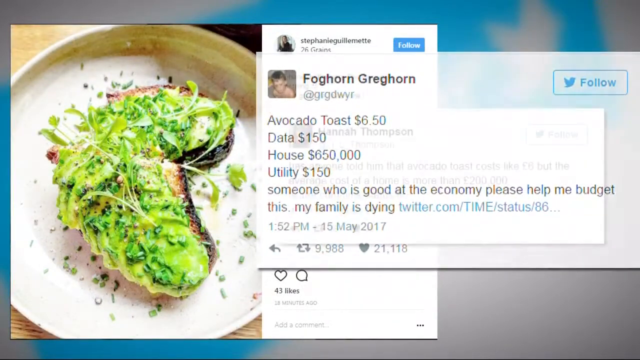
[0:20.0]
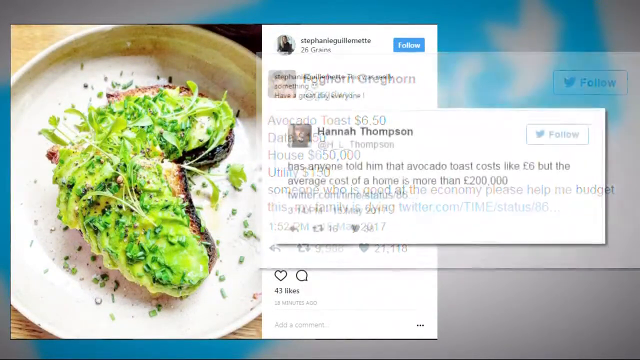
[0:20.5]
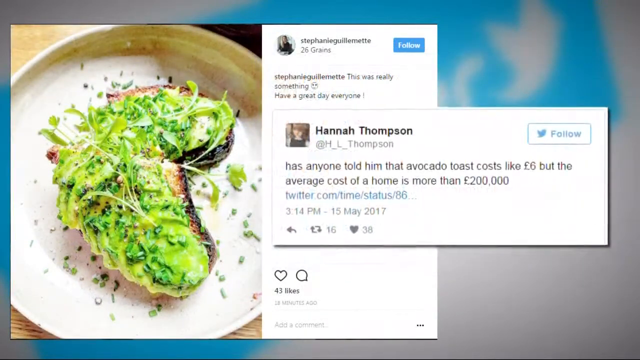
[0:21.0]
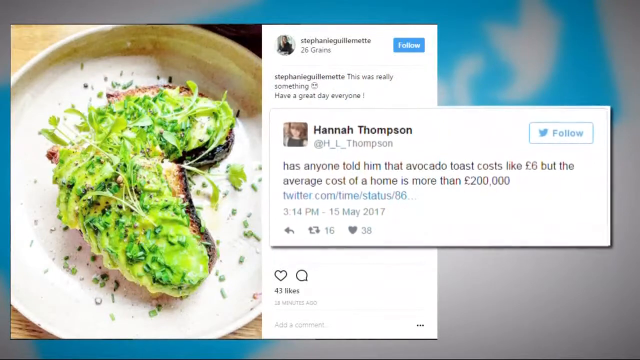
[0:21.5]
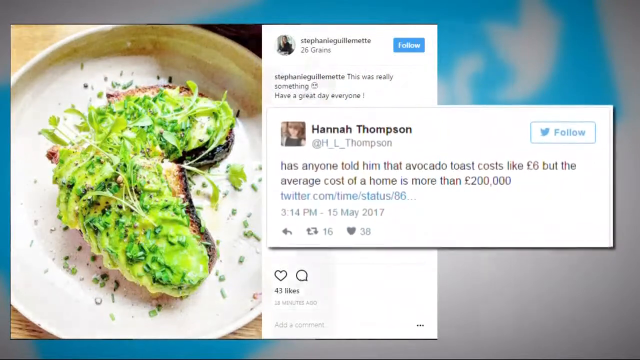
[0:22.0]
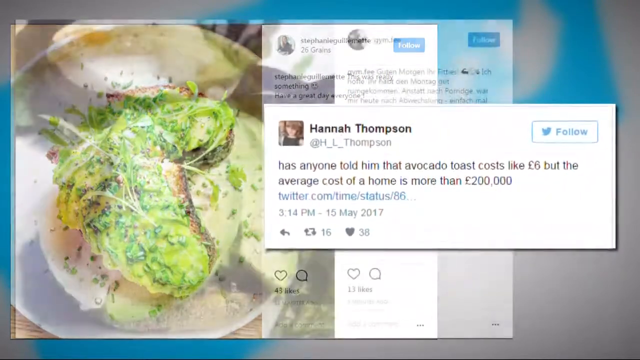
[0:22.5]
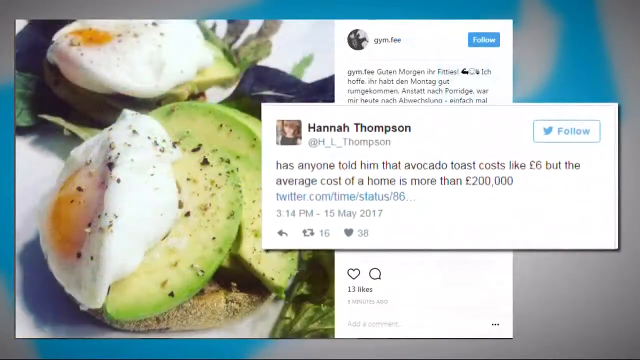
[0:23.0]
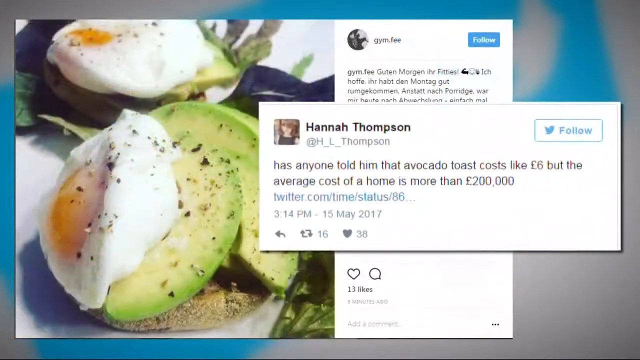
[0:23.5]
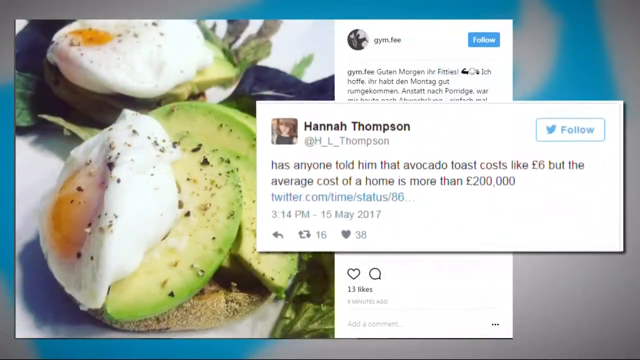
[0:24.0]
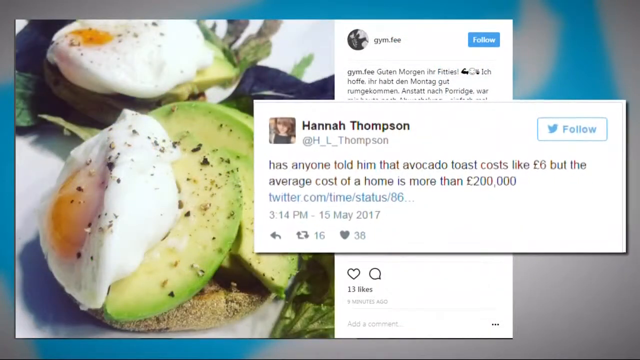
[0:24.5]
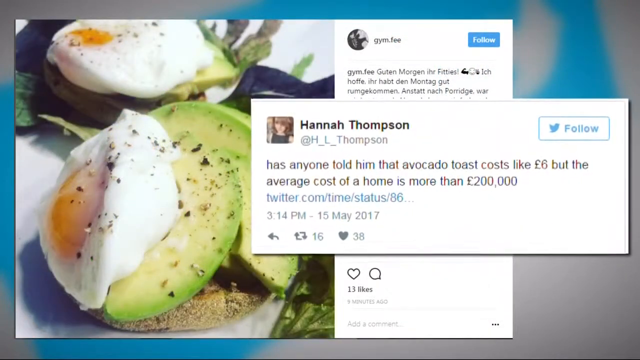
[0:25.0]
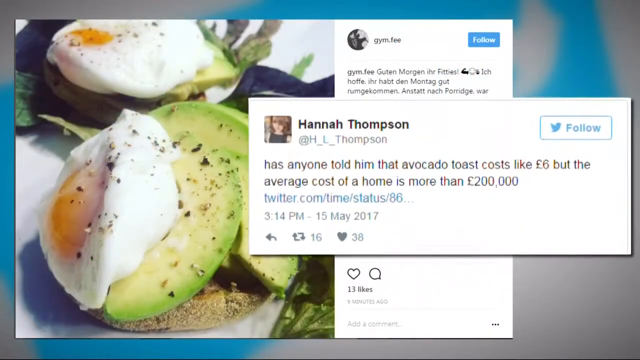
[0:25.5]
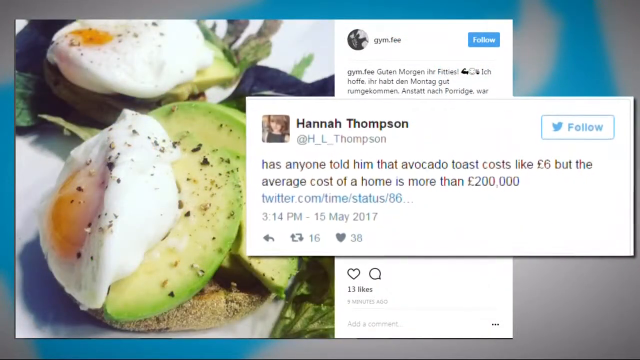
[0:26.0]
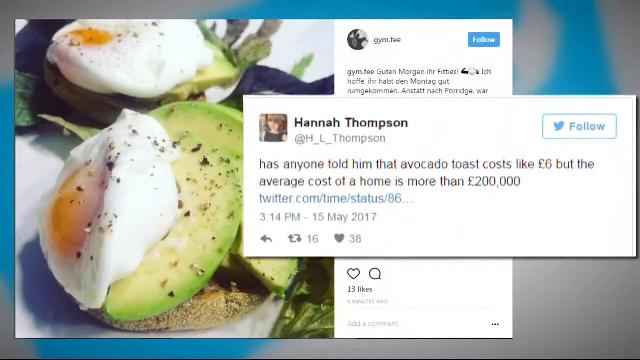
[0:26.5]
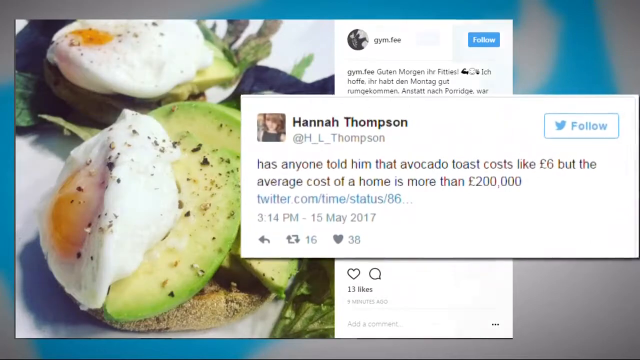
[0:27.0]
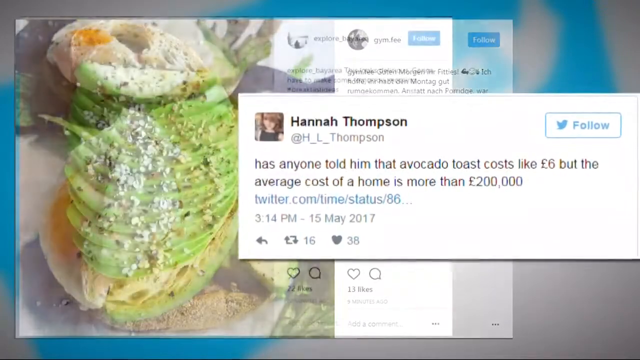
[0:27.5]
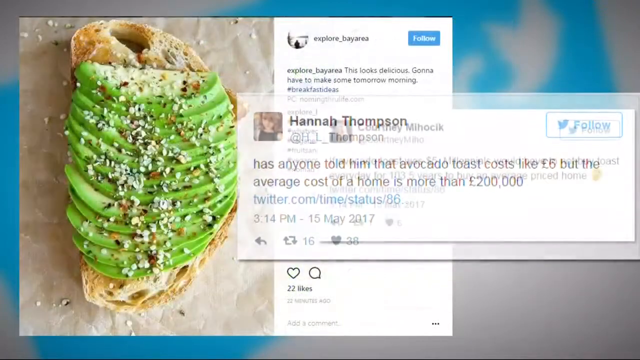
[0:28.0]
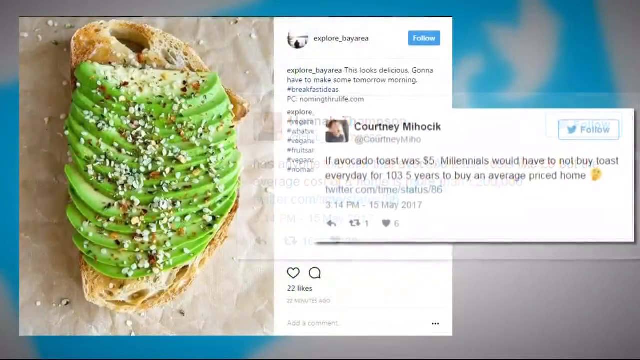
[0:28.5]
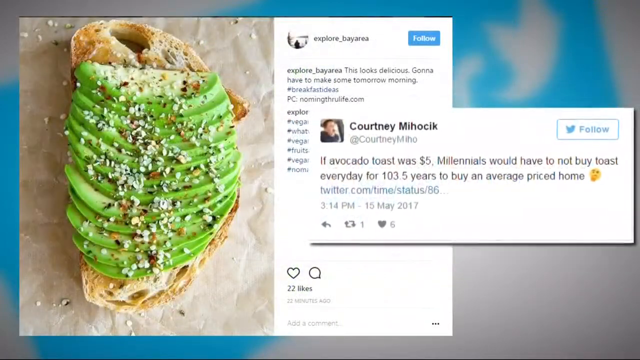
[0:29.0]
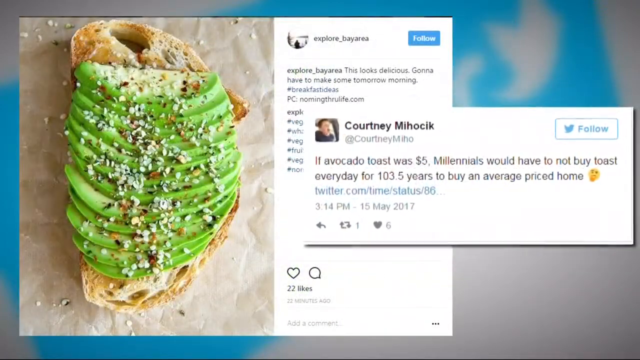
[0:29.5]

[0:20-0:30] Another picture shows another avocado toast, apparently with some type of green sprouts on top: two pieces of toast kind of laying on top of each other on a white ceramic plate. A post from Hannah Thompson comes up, apparently shared on Twitter, saying "has anyone told him that avocado toast costs like 6 euros, but the average cost of a home is more than 200,000 euros?" Behind it is another Twitter post from jim.fi that begins "guten morgen, ihr fitties. Ich hoffe, ihr habt den Montag gut" and is kind of cut off. It has a picture of avocado toast with an egg on top, like a lightly cooked egg. After that, another Twitter post appears.